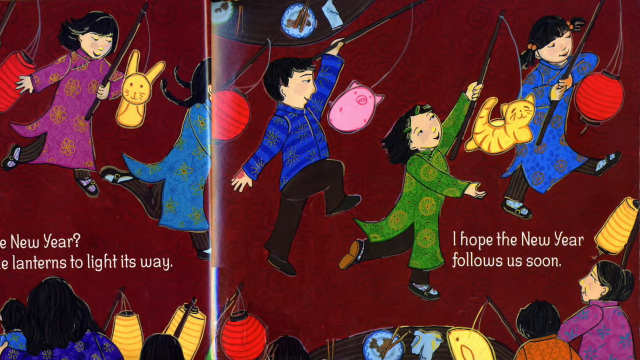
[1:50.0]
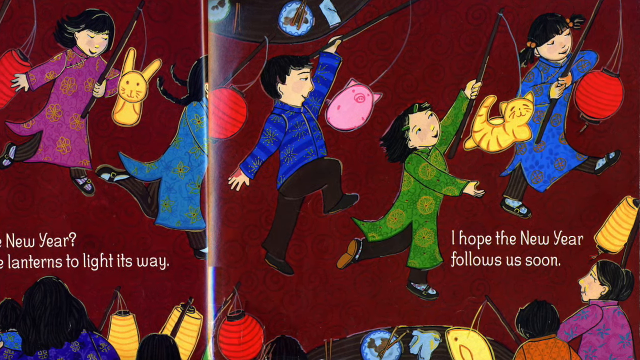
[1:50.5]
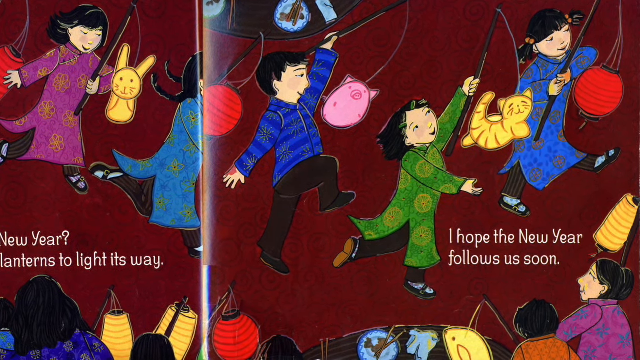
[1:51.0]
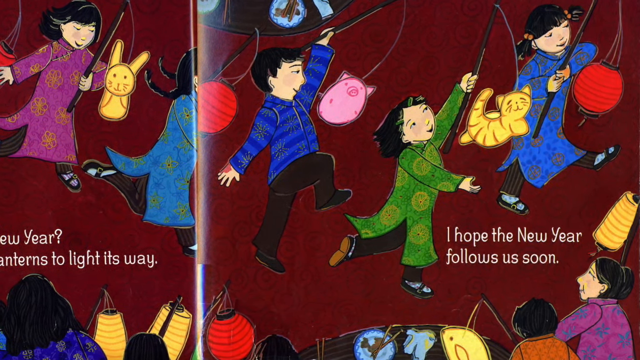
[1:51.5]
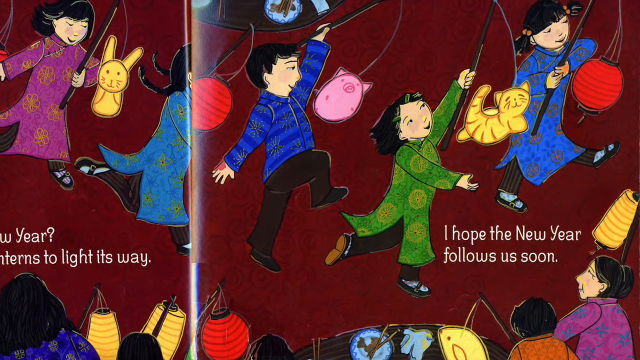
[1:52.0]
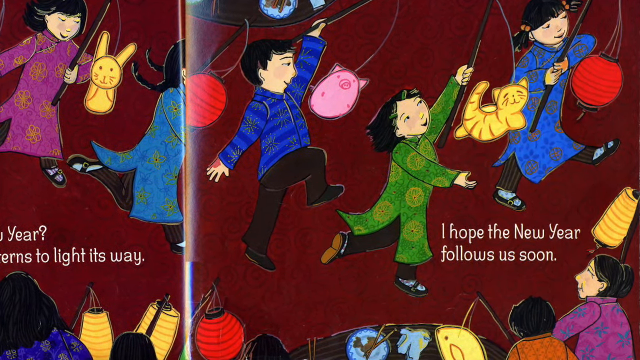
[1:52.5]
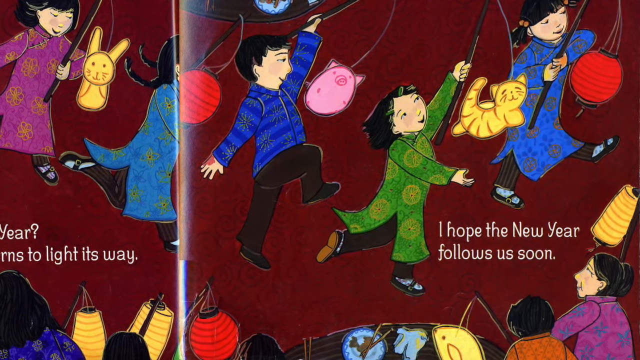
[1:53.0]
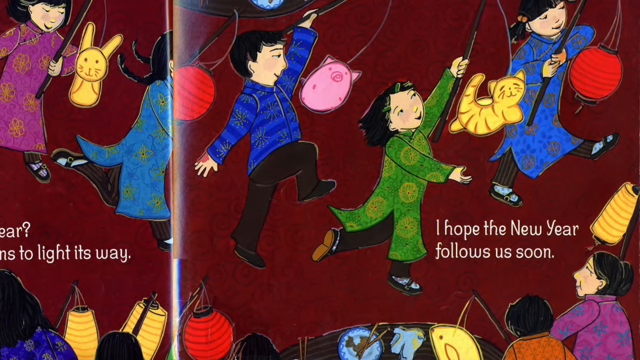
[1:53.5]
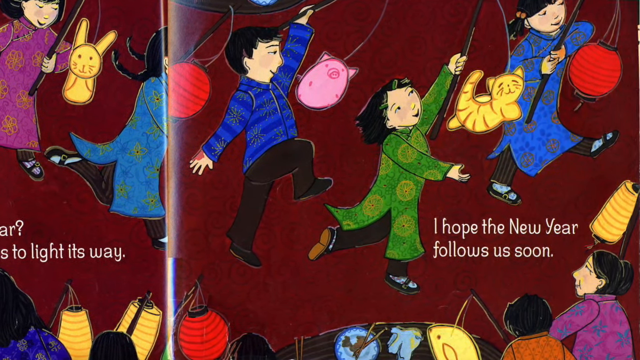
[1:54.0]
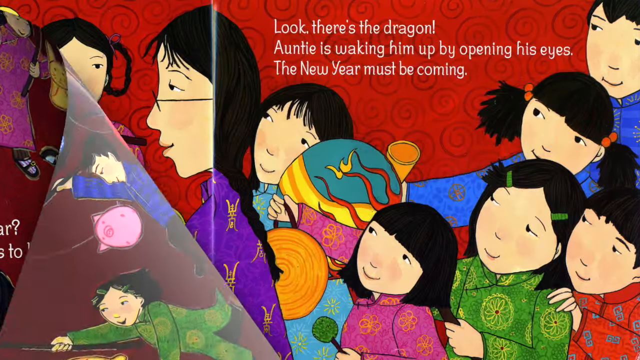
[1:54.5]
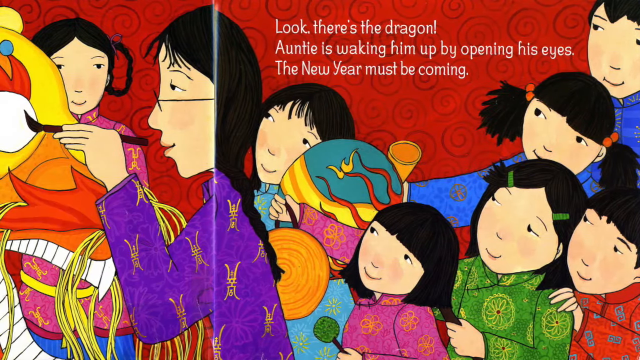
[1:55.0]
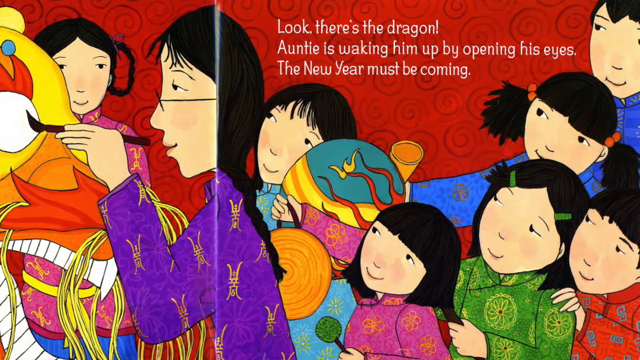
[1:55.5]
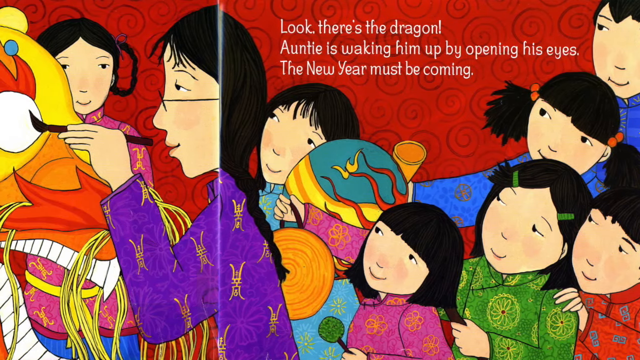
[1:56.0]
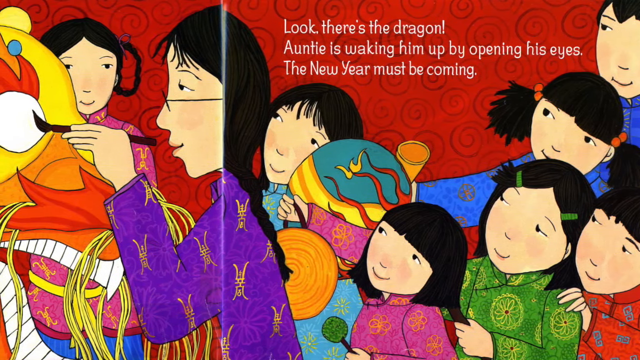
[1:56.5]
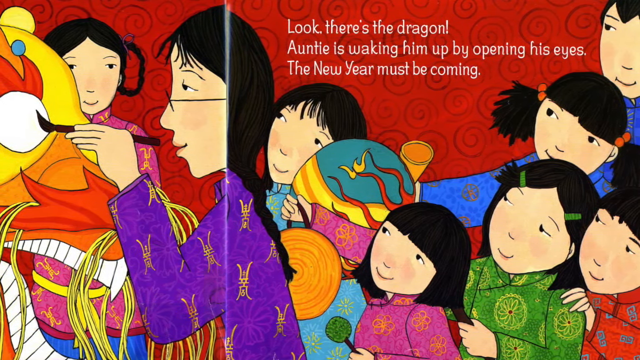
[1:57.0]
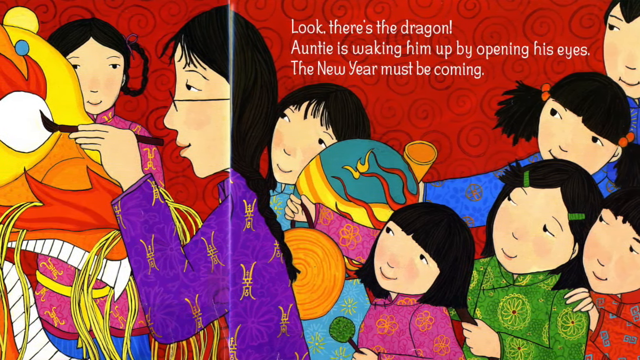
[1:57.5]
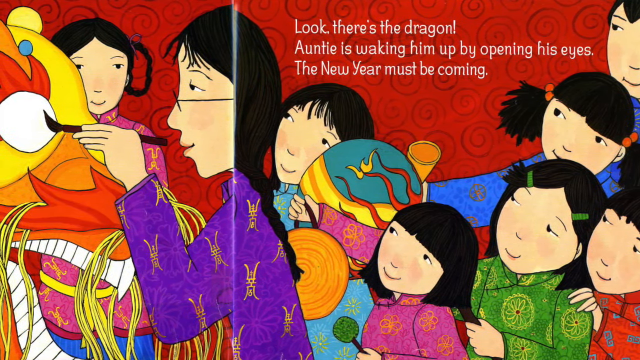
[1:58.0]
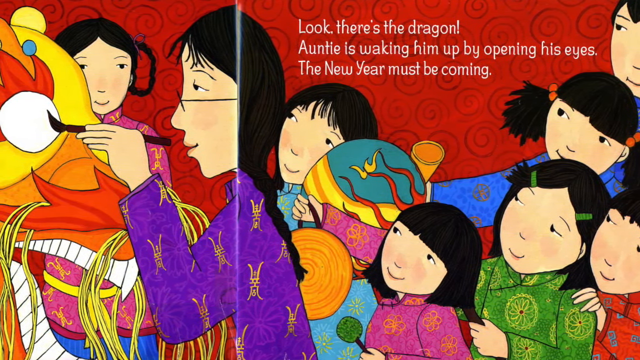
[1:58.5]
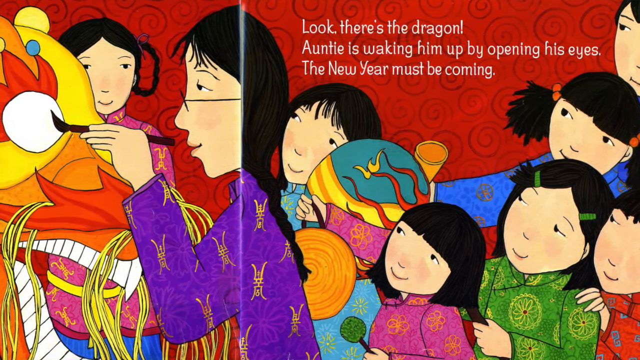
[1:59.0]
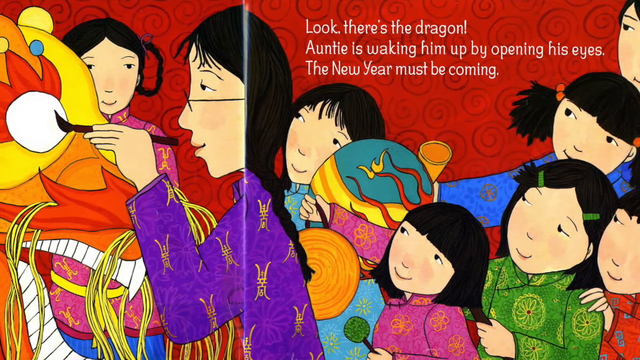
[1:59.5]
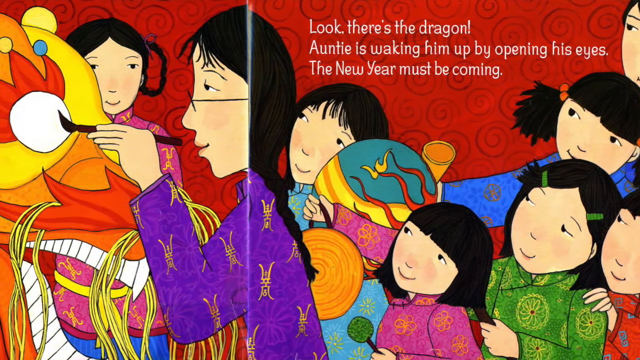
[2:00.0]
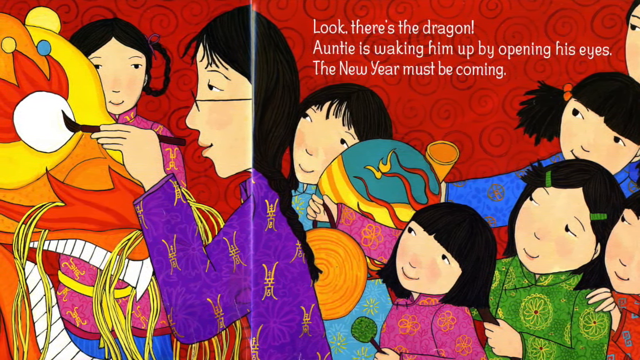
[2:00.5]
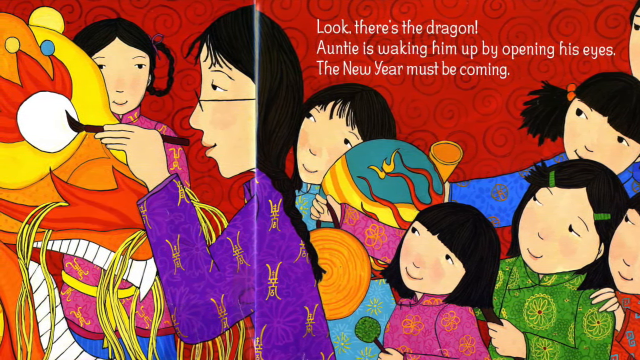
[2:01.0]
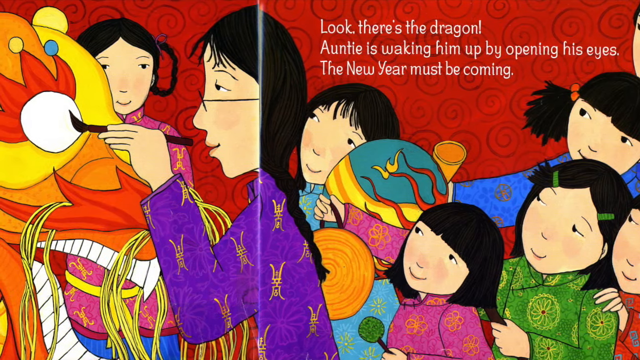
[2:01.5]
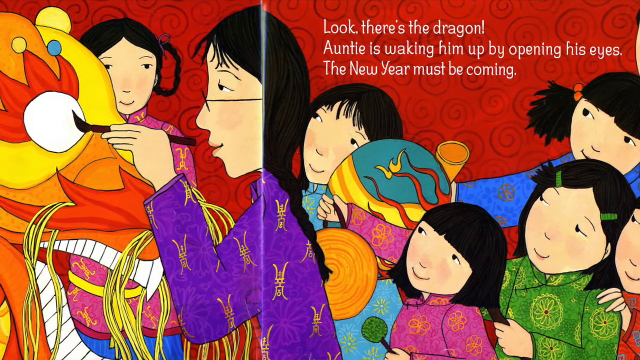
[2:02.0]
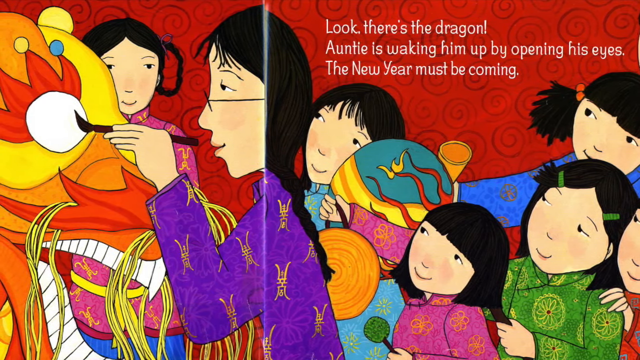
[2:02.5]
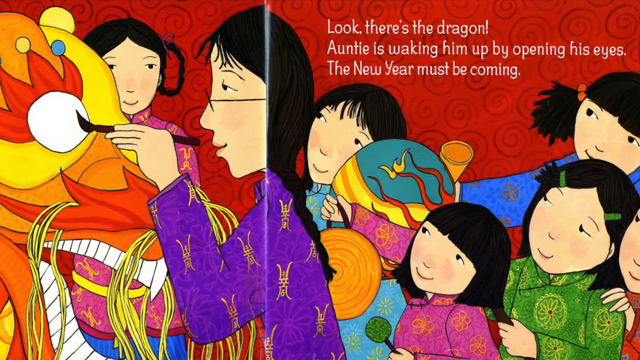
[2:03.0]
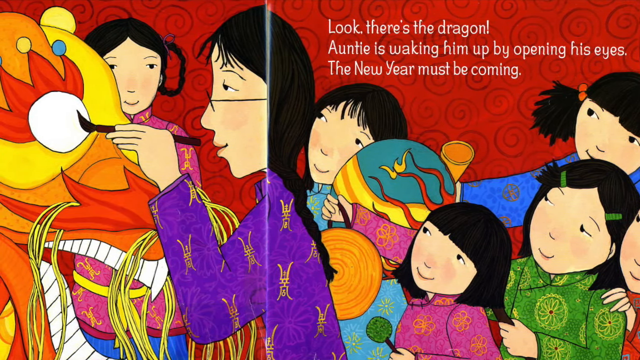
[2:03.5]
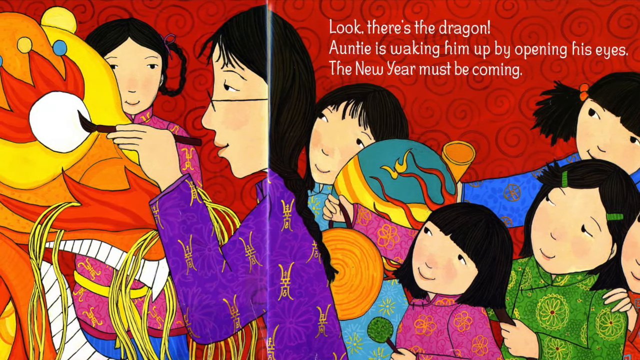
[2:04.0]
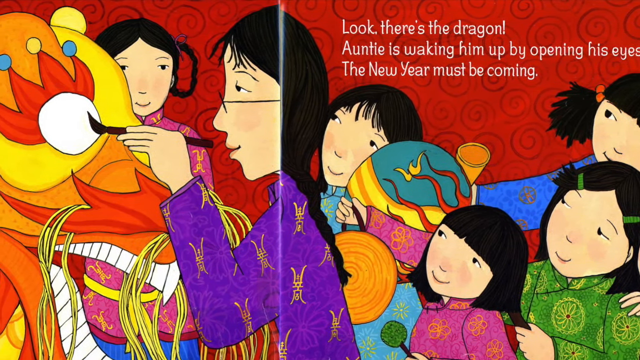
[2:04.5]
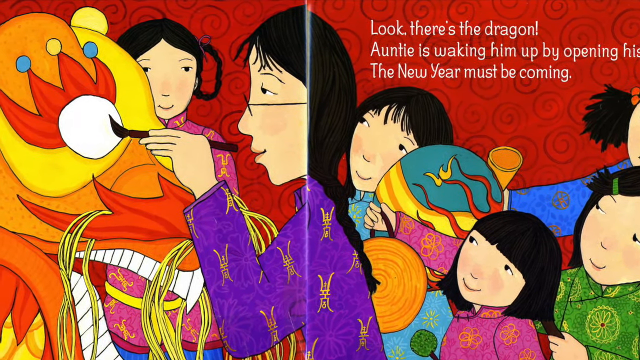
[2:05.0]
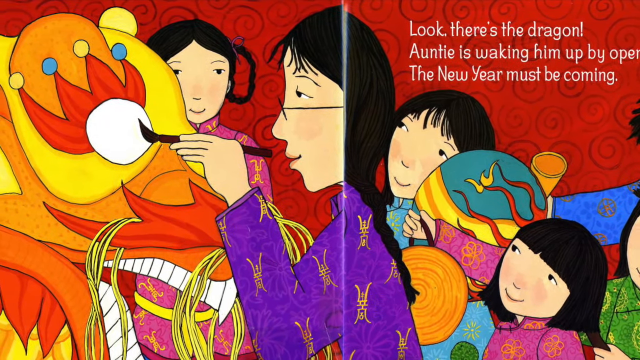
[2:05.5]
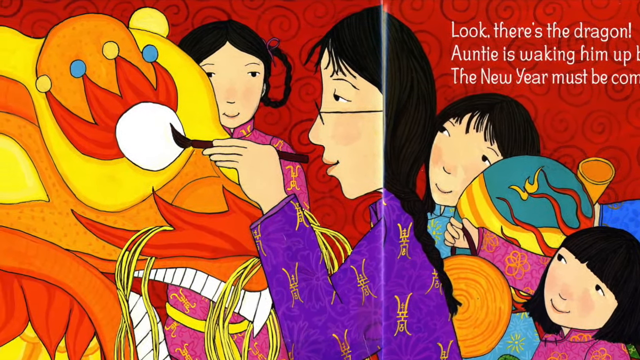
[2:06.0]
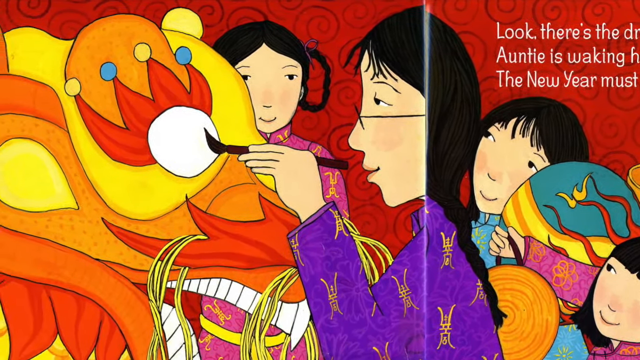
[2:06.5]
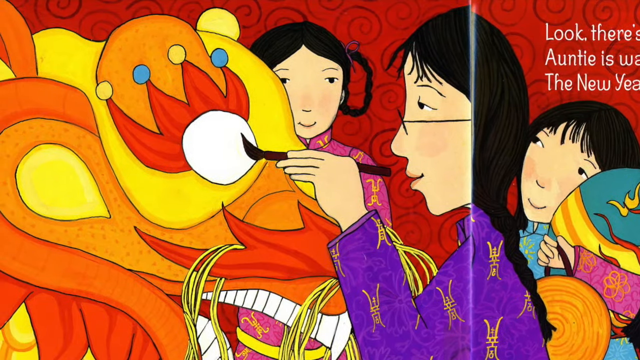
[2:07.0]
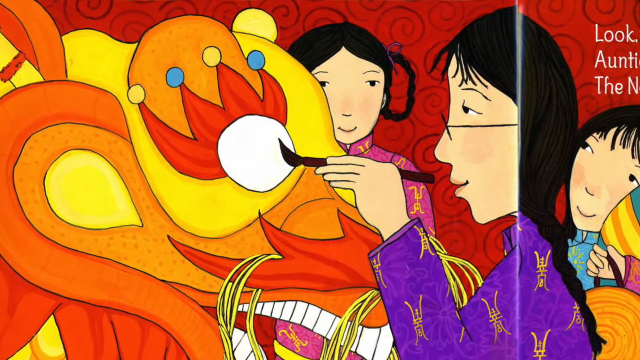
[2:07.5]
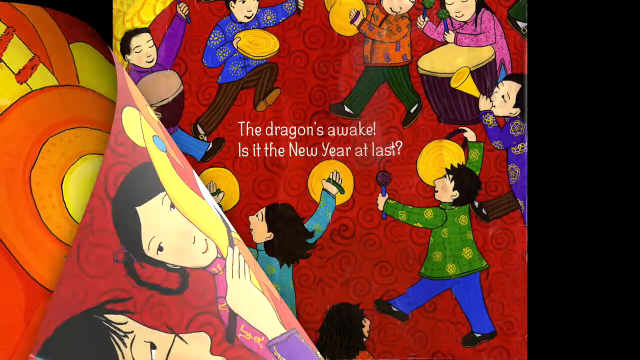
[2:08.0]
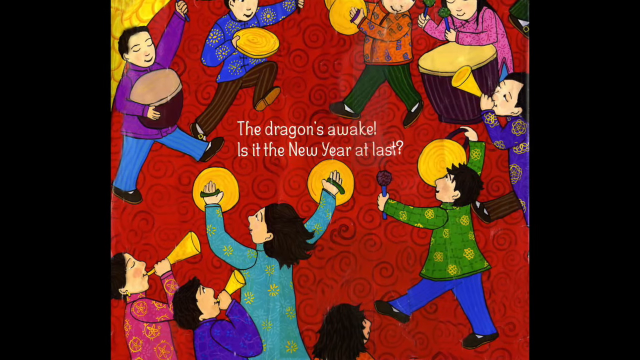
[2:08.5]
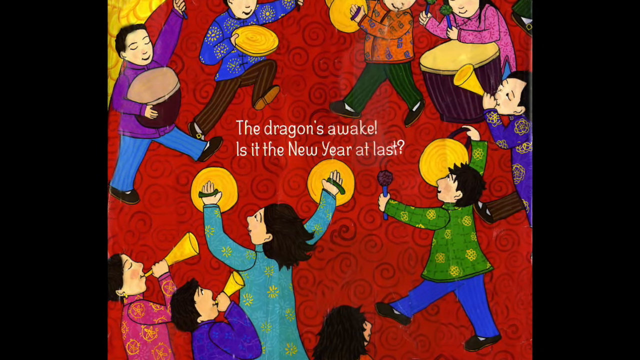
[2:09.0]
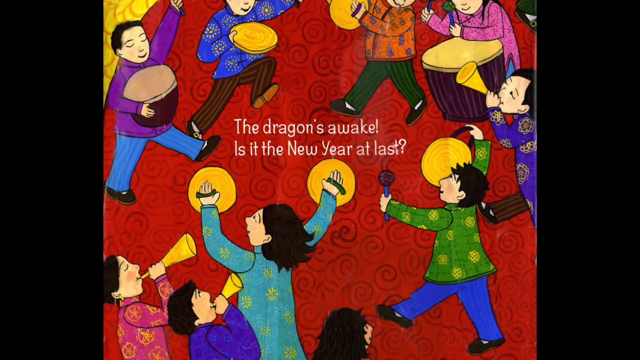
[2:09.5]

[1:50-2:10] A group of children is shown: a girl in pink holding a bunny lantern, one in blue apparently holding a red circle lantern, a boy in blue holding a piggy lantern, a girl in green holding a kitty lantern, and a girl in blue holding a red lantern. On the right the text reads "I hope the new year follows us soon", and the view slowly zooms in on it. The page changes to many children looking upon an adult painting a dragon. Text reads "look there's the dragon auntie is waking him up by opening his eyes The new year must be coming soon", and he is painting the eyes on the right. The view zooms in quickly to the dragon's face. The page then changes to one reading "the dragon awakes is it New Year's at last", surrounded by people dancing around with instruments such as horns, cymbals, drums and even a gong.